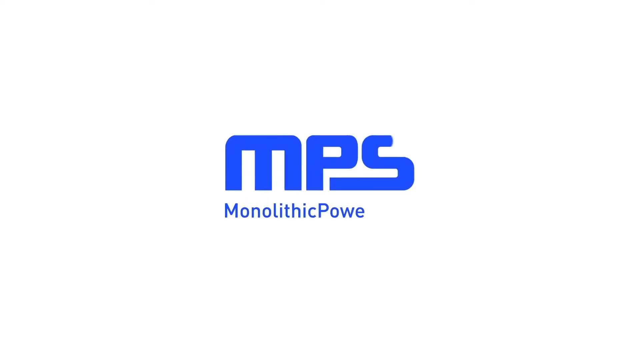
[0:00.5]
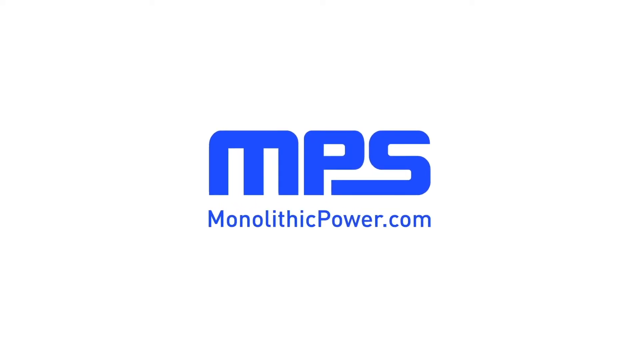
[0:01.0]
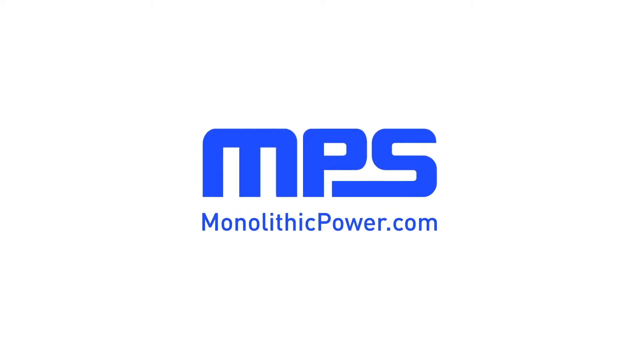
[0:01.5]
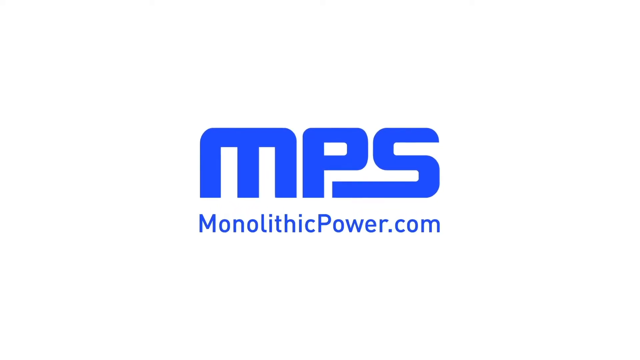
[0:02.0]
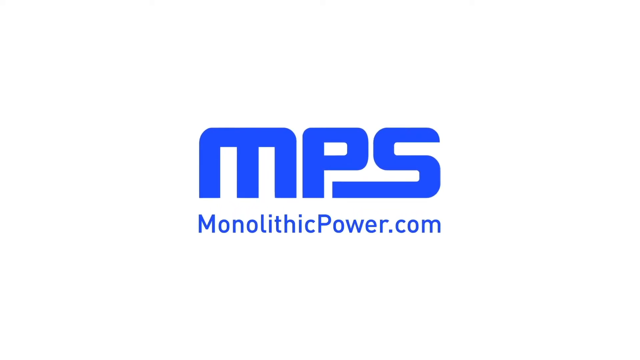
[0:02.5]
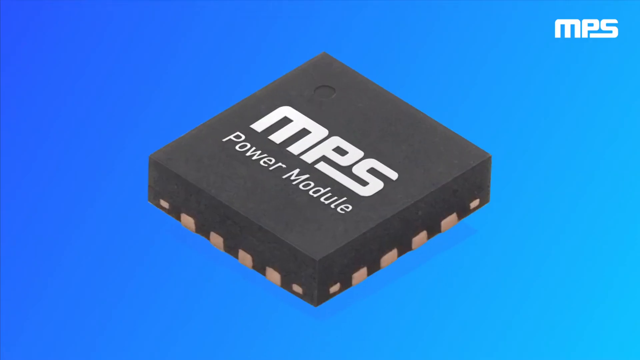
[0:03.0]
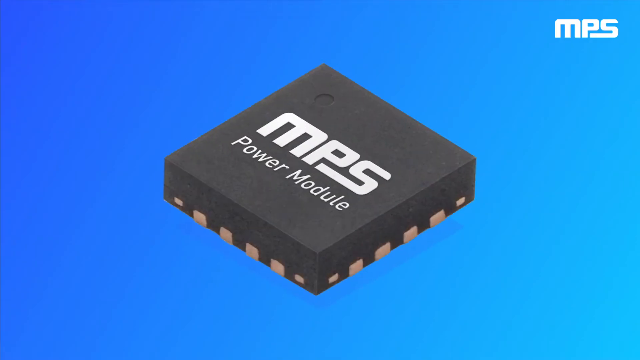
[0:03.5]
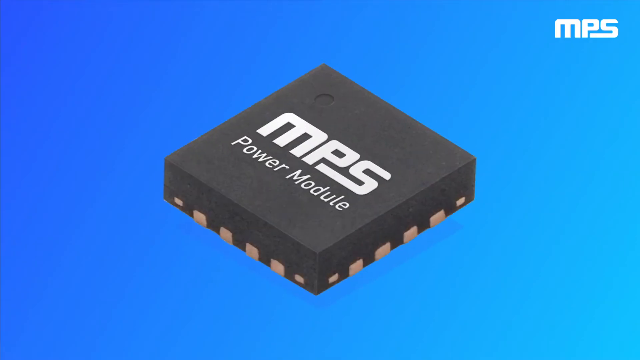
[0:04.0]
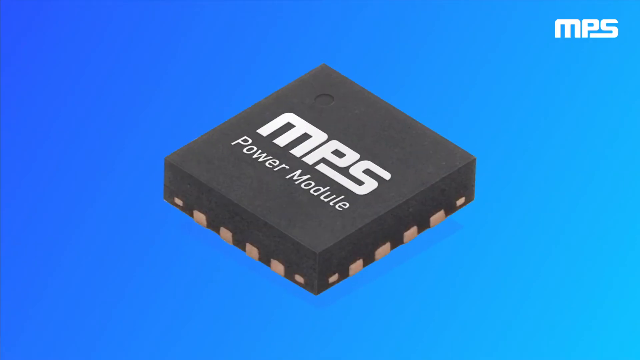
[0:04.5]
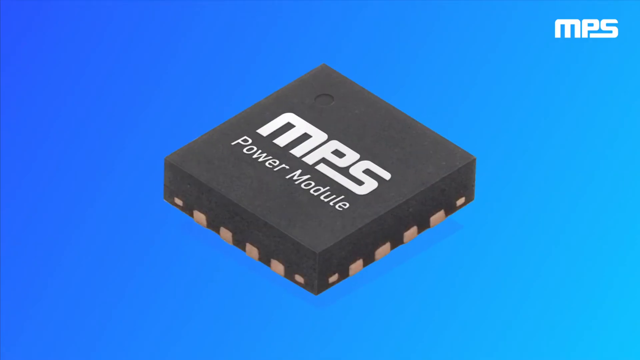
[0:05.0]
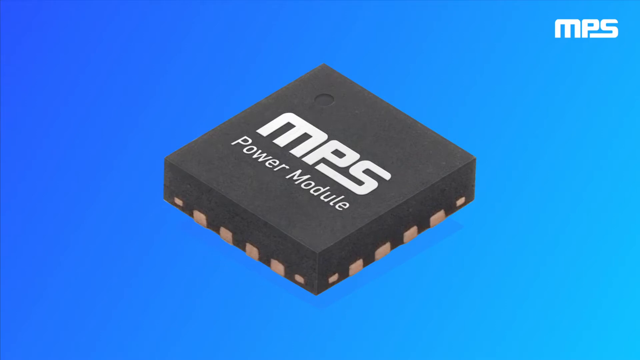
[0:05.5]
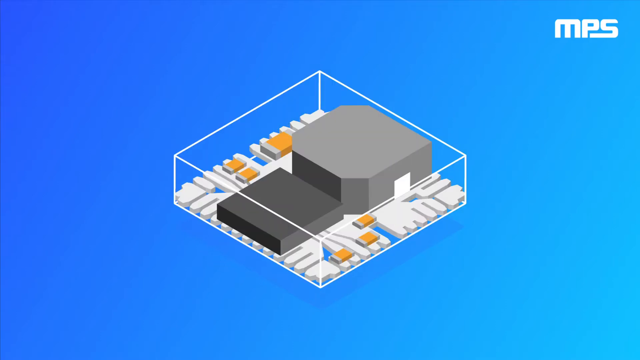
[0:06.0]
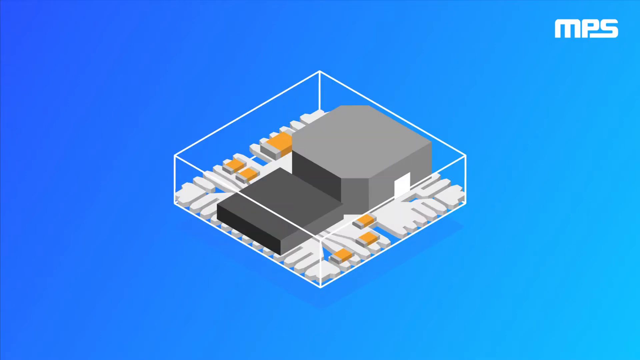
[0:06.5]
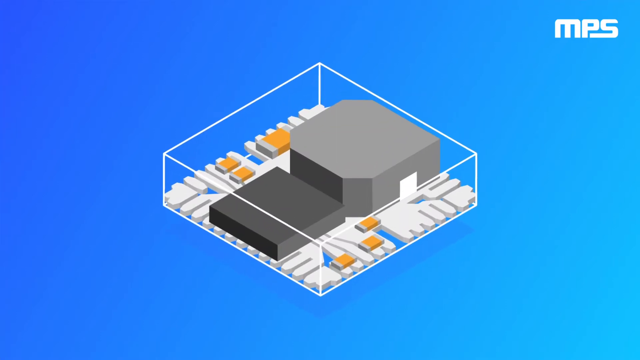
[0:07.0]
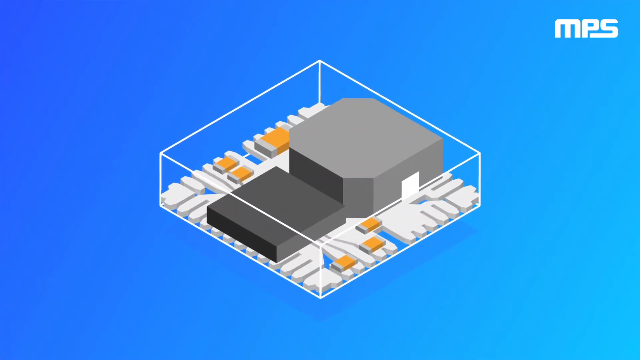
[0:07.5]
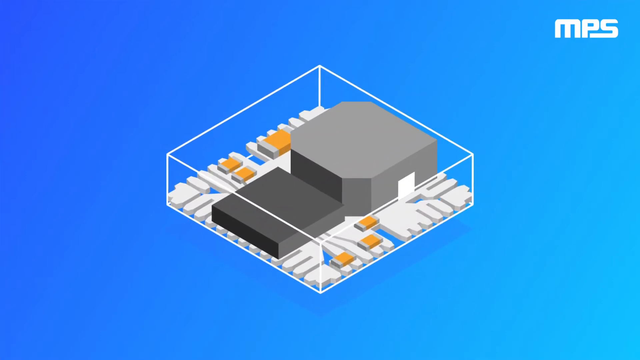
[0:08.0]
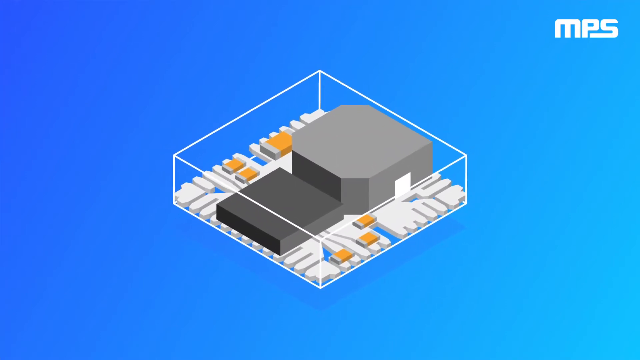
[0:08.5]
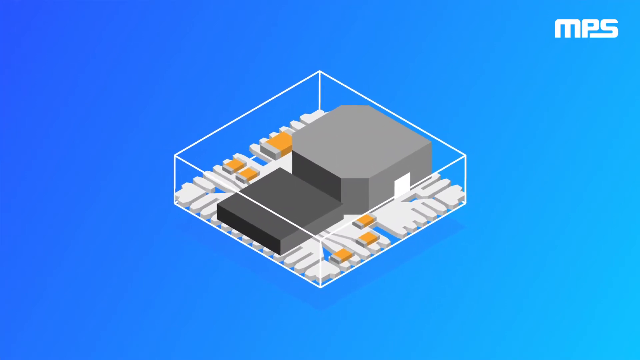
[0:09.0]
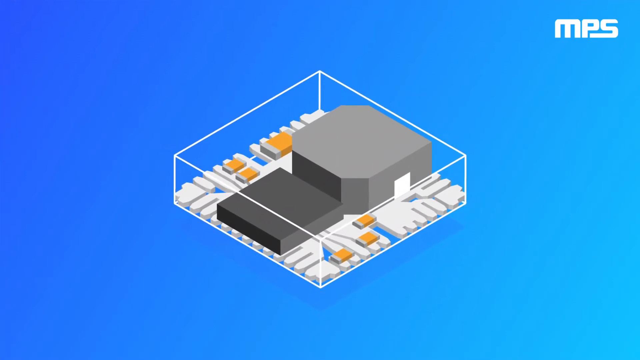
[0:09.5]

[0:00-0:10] The video opens with the logo of a company called Monolithic Power: the letters MPS and the link to their website, monolithicpower.com, appear on a white background, everything in a dark blue, almost a royal blue. This is replaced by a blue background with the logo in white in the top right corner and a three-dimensional rectangular or square shape, almost a flattened cube. The shape is black, with the logo in white on top along with the words "Power Module". It is then stripped back to reveal its insides, and what appears to be a white circuit board with little gold bits and gray structures on it is visible inside the now see-through shape.